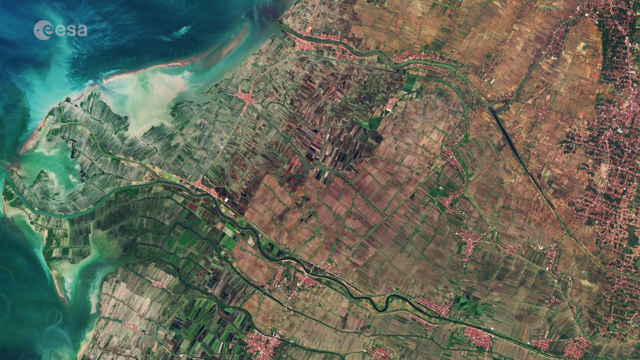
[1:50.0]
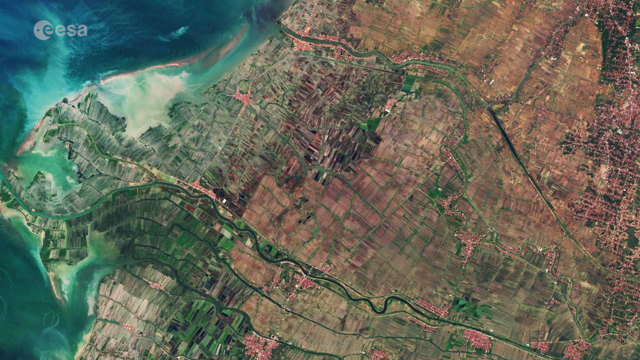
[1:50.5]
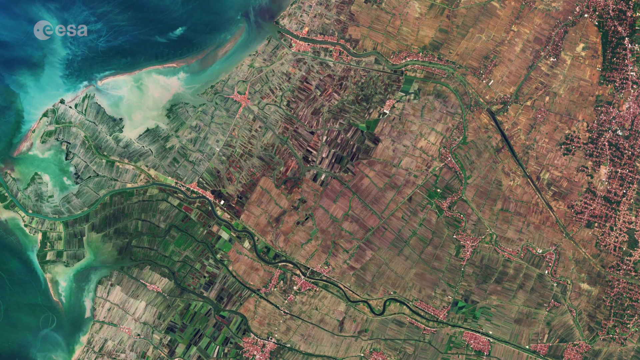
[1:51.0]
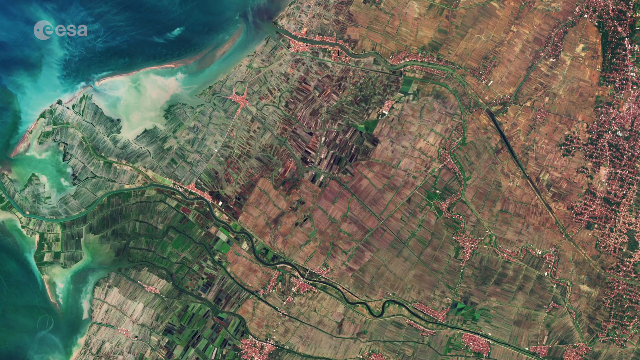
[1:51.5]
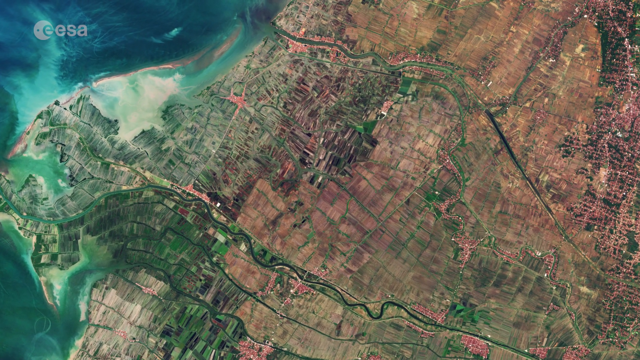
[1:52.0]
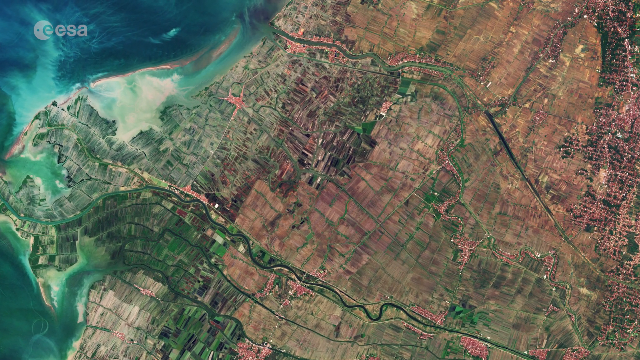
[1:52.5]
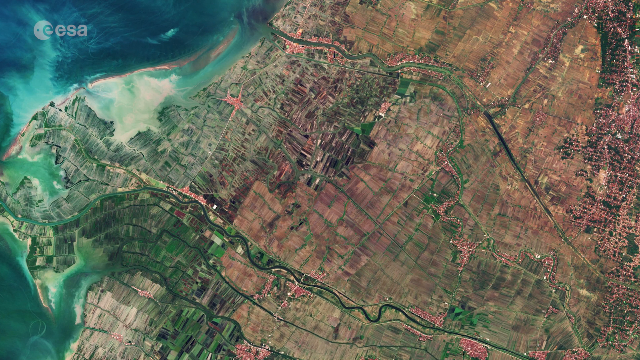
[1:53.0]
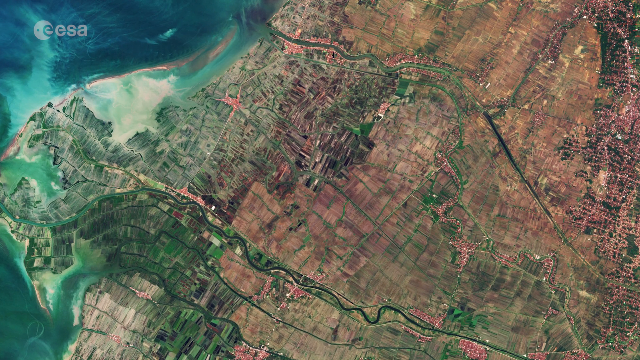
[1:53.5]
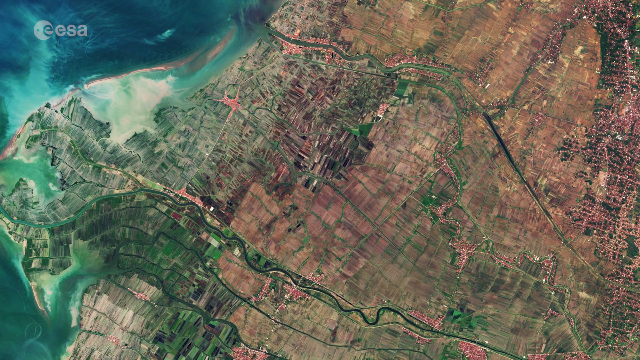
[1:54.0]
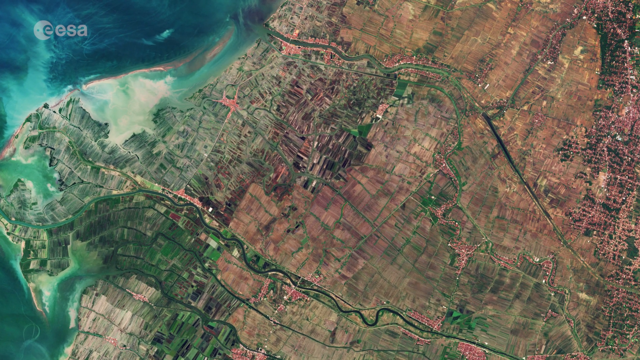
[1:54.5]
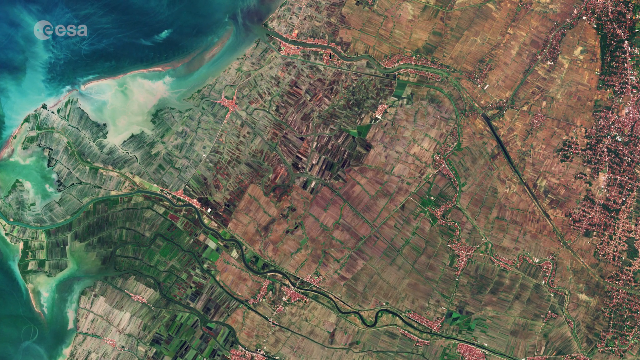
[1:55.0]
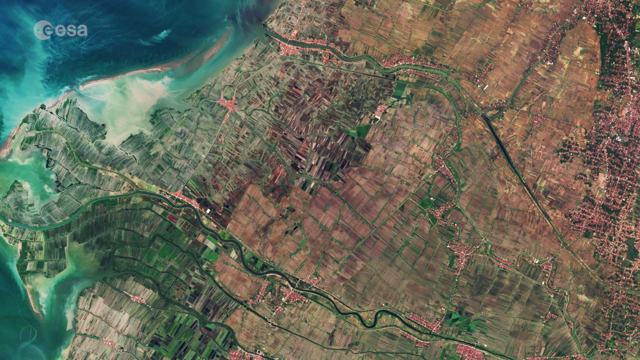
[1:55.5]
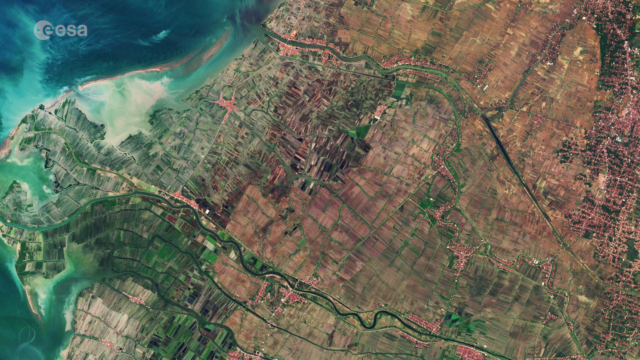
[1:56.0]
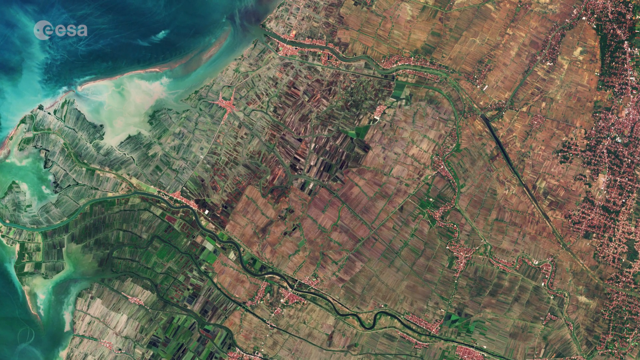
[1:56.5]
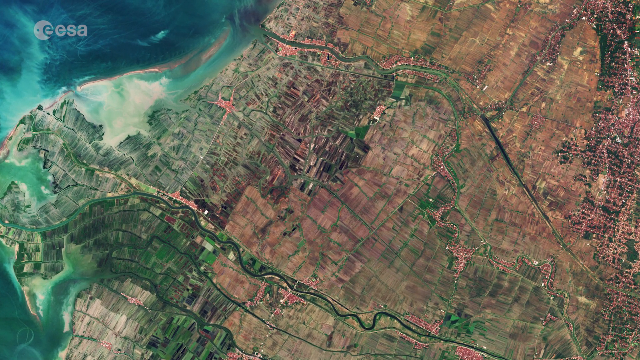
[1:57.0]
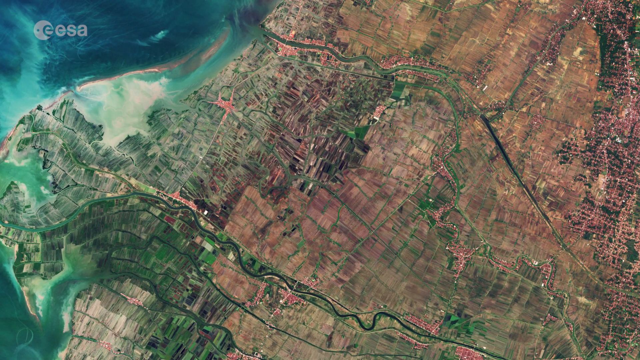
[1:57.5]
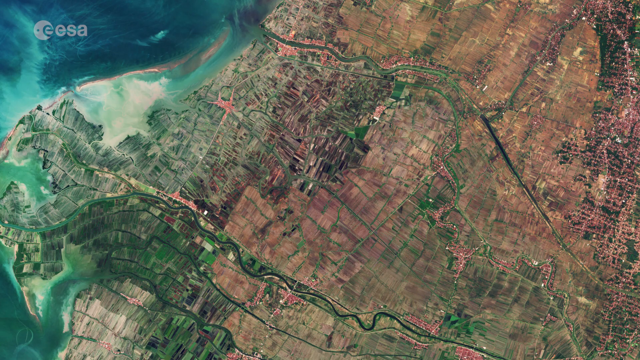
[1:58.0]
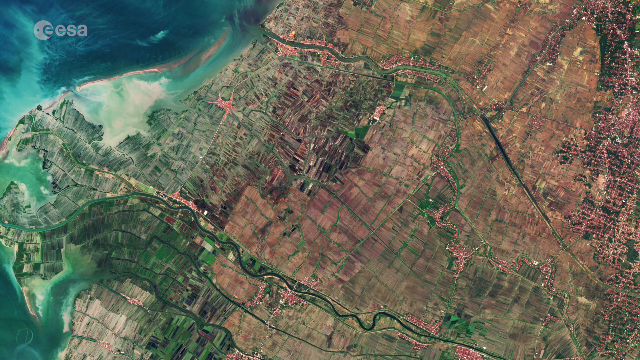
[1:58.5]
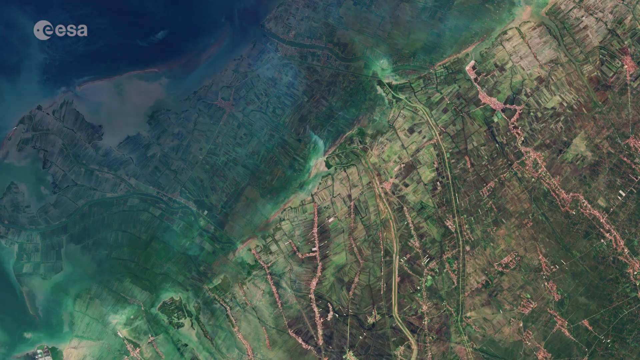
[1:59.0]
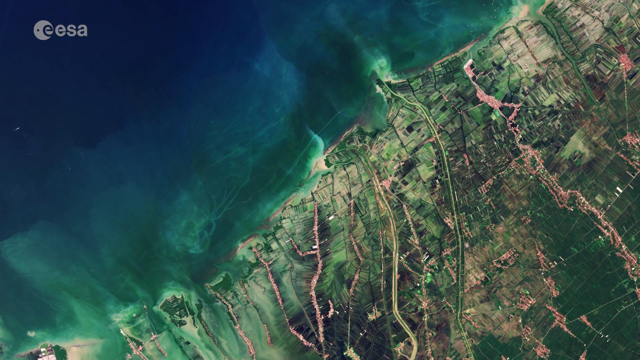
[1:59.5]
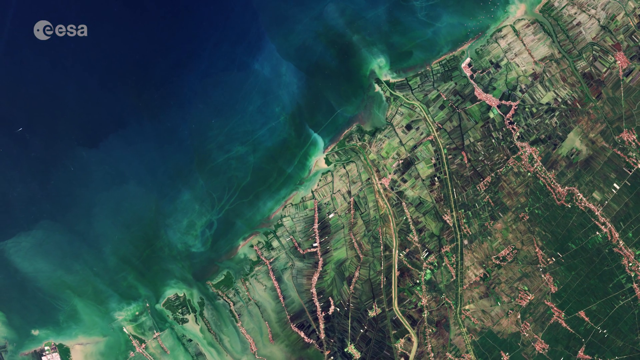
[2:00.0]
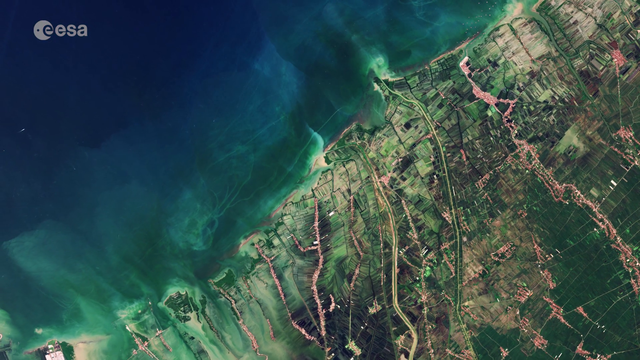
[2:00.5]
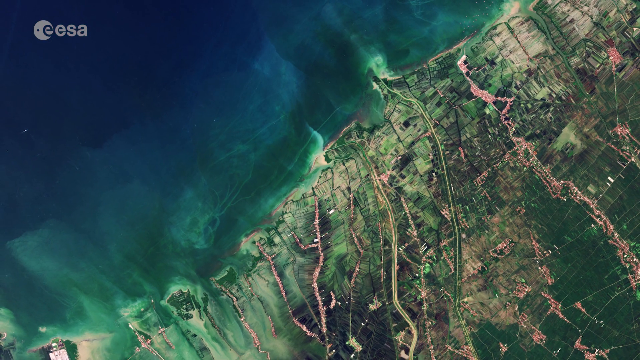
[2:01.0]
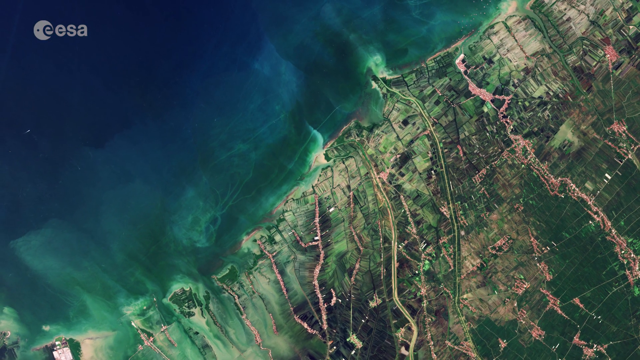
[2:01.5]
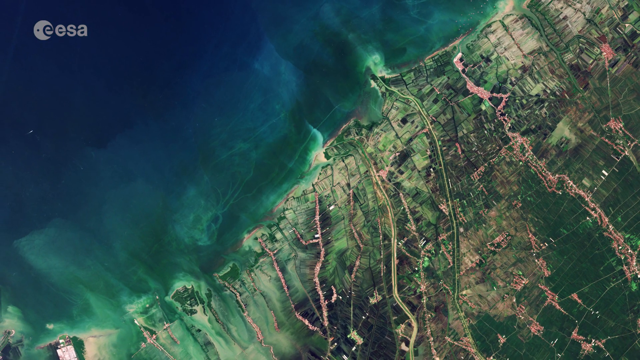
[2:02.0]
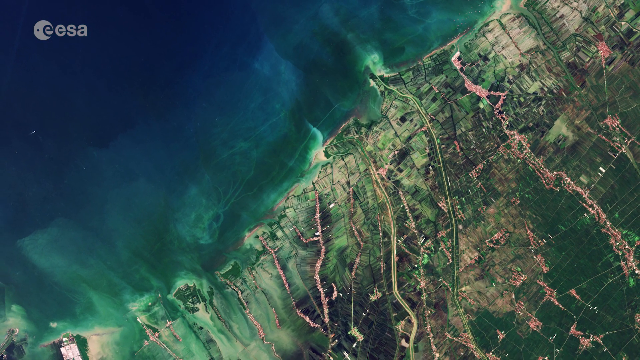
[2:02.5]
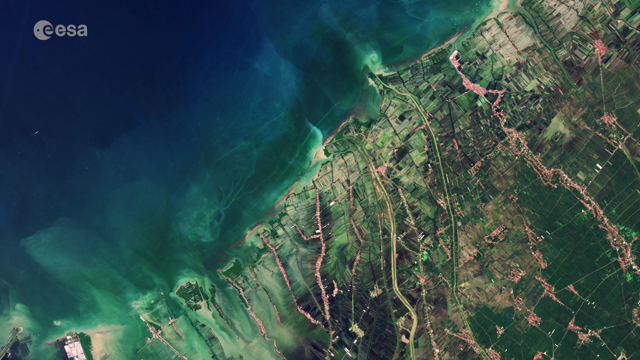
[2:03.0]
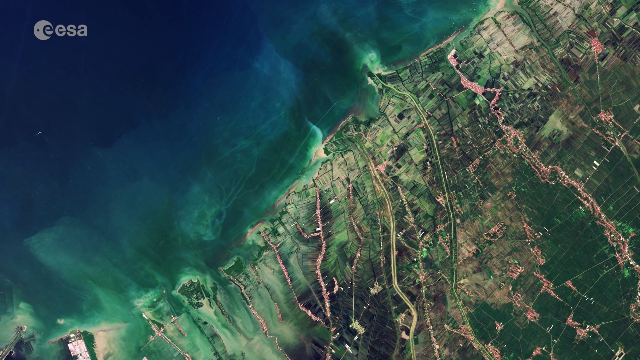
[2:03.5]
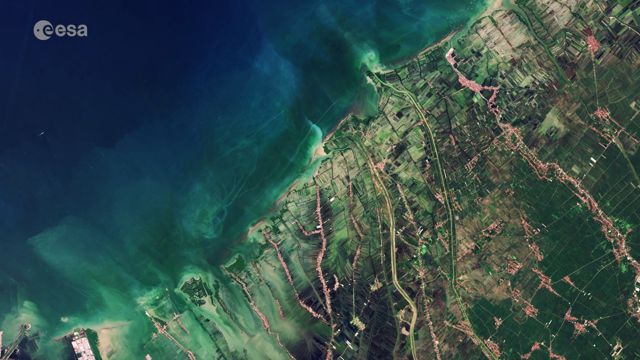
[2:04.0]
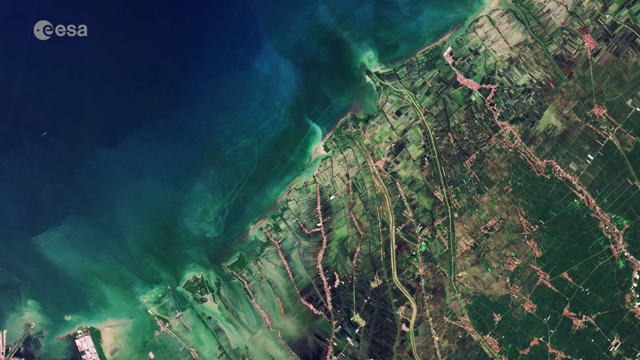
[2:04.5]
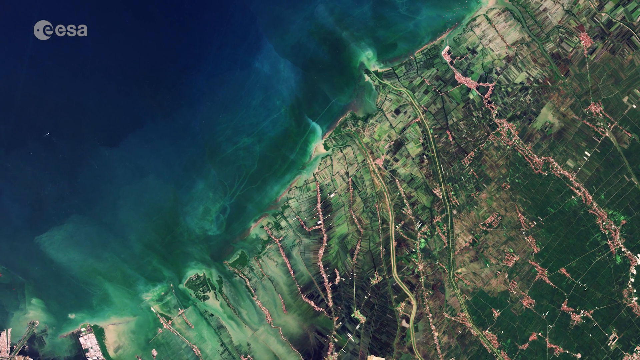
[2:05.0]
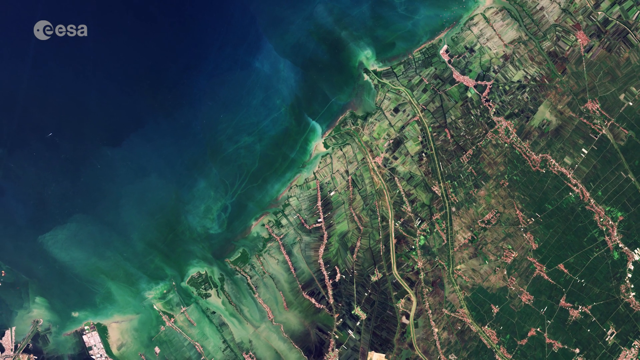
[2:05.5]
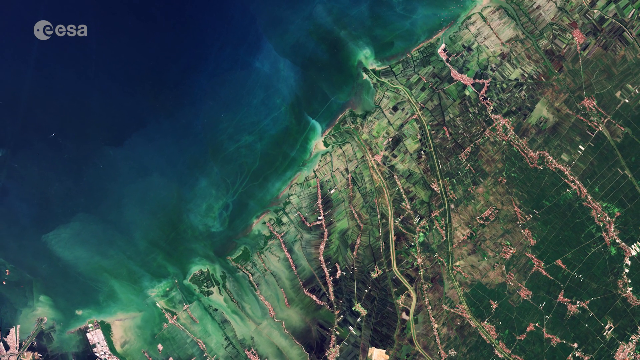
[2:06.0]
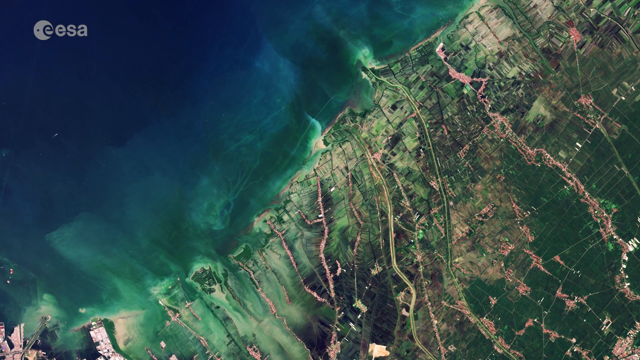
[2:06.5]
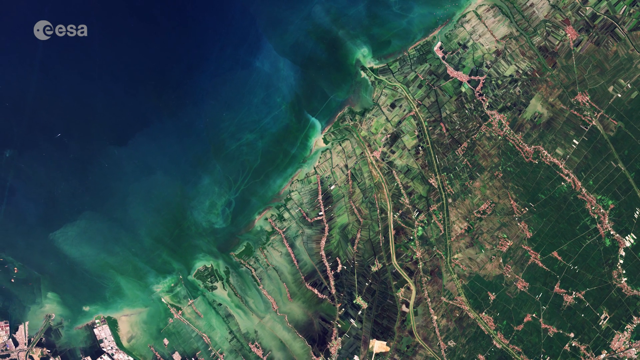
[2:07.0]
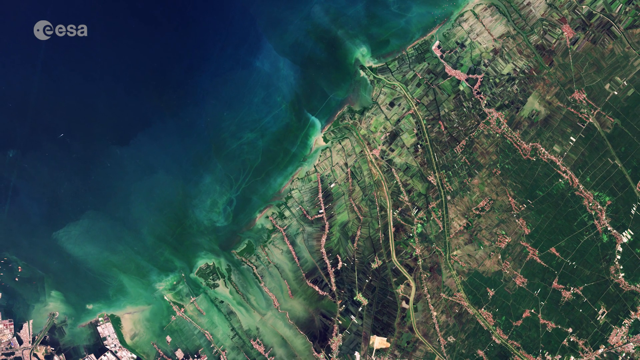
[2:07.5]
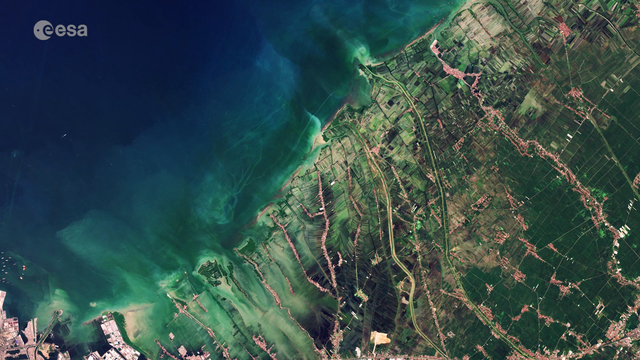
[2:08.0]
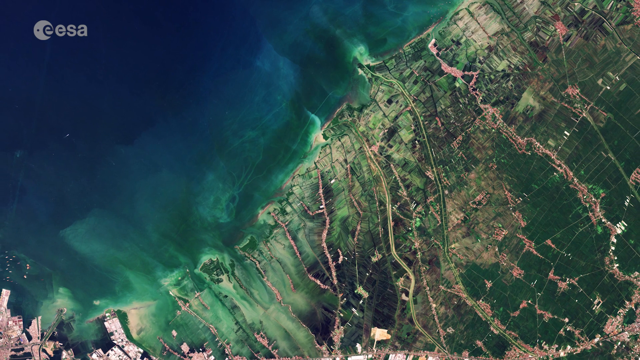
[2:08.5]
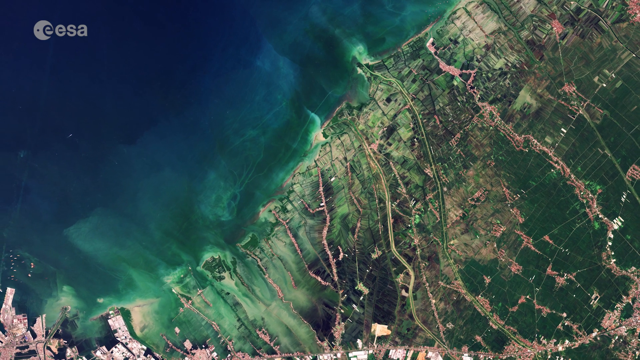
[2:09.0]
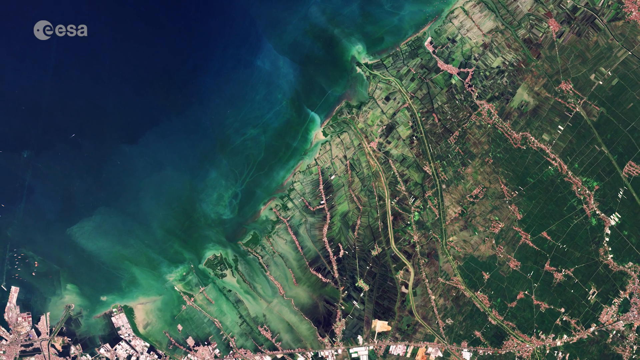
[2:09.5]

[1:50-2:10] The focus is on brown, green, light green, dark green, black, gray, white and lighter green boxes that do not really align, with superimposed heavy lines leading out toward the water. The lines are not really straight and have a couple of curves. One runs around the bottom third of the image in a diagonal line toward the water. The other is around the top third and goes toward the water; it also has sort of a diagonal stretch, then sort of curves, and has a gentle bend toward the water. The view zooms in a little, changes, and backs up a little, showing light green and dark green and more white lines leading toward the water. It then zooms out over the land mass, which is delineated with boxes and squares that do not align well.